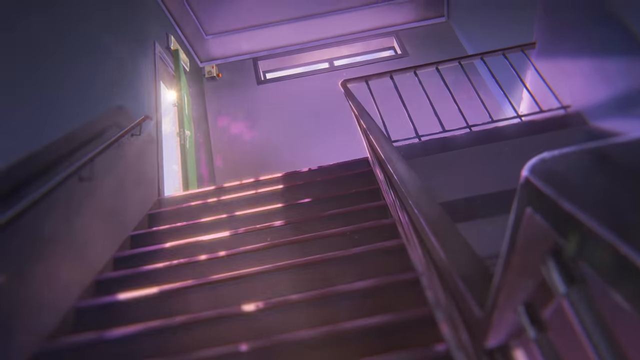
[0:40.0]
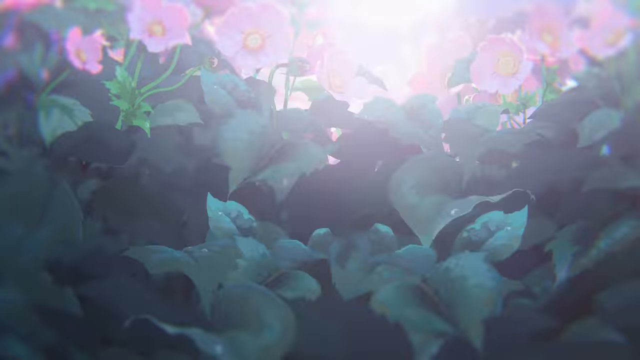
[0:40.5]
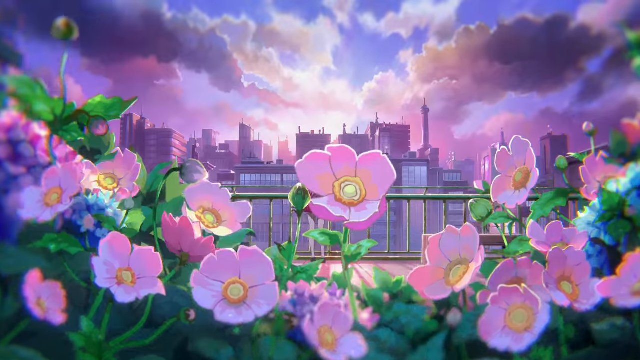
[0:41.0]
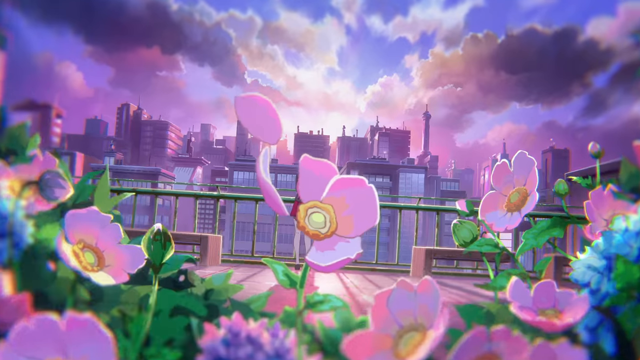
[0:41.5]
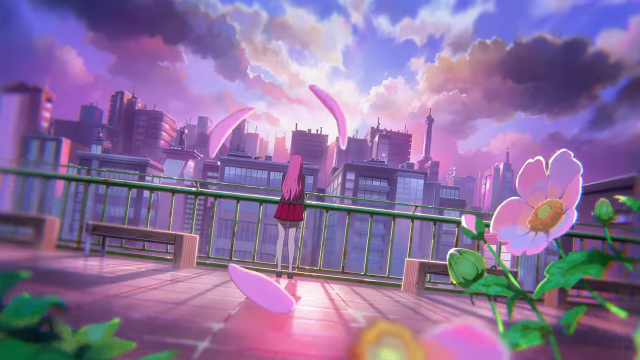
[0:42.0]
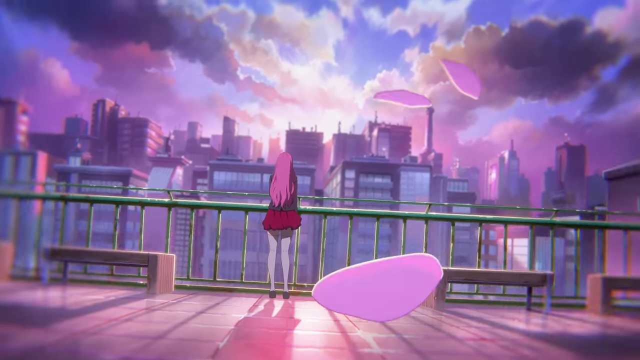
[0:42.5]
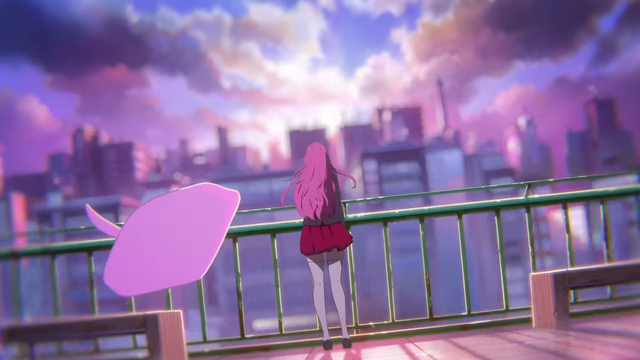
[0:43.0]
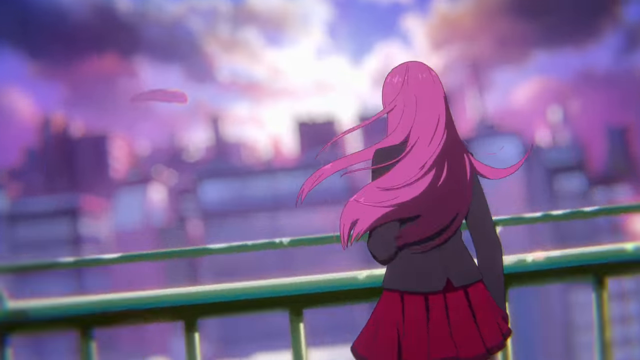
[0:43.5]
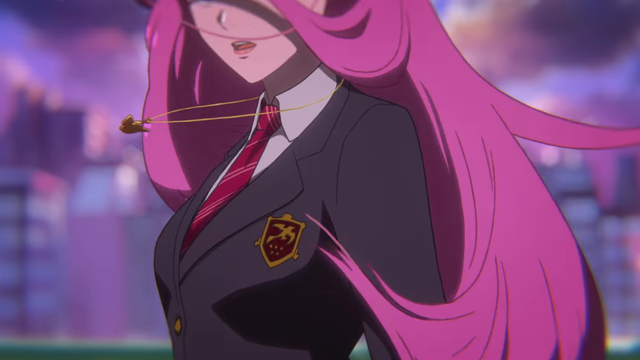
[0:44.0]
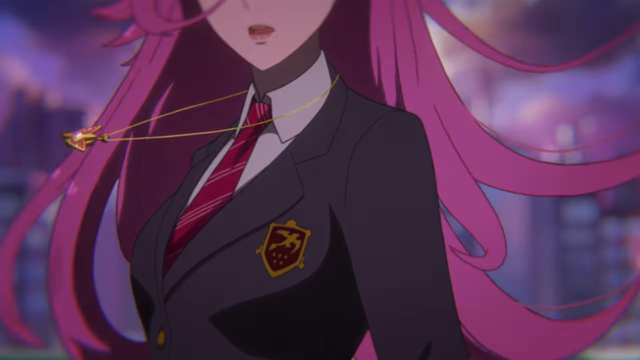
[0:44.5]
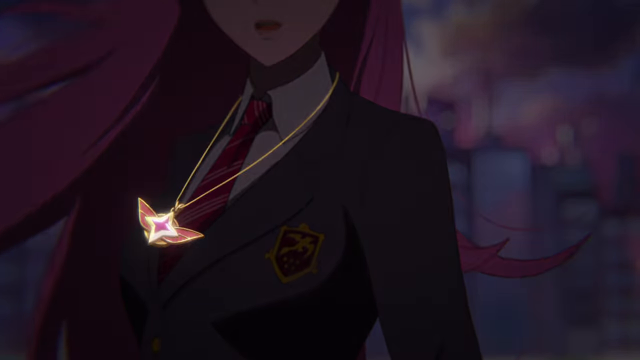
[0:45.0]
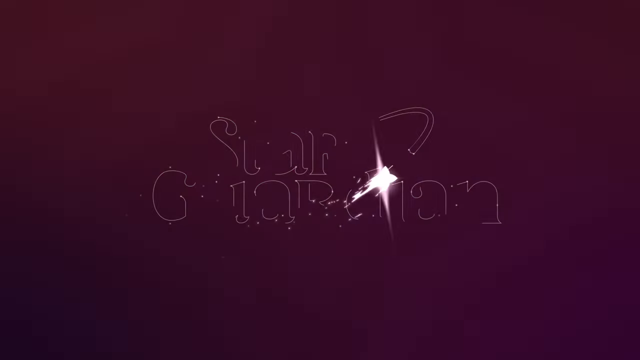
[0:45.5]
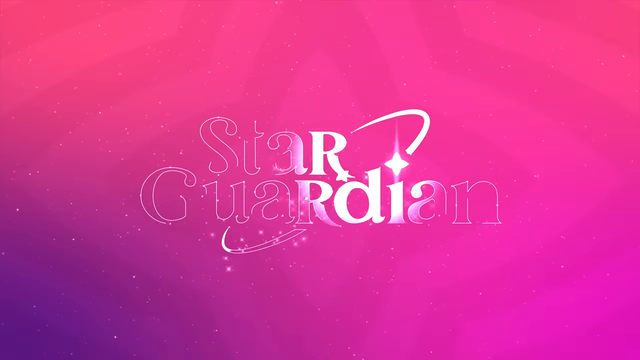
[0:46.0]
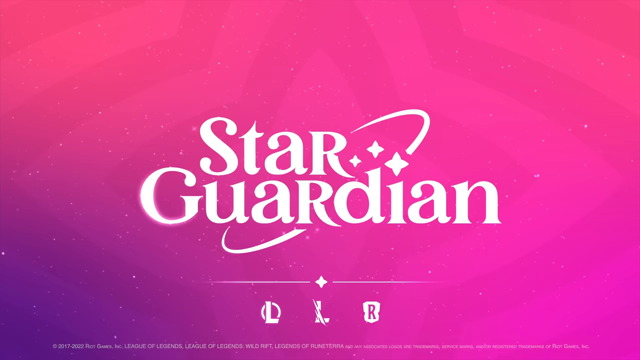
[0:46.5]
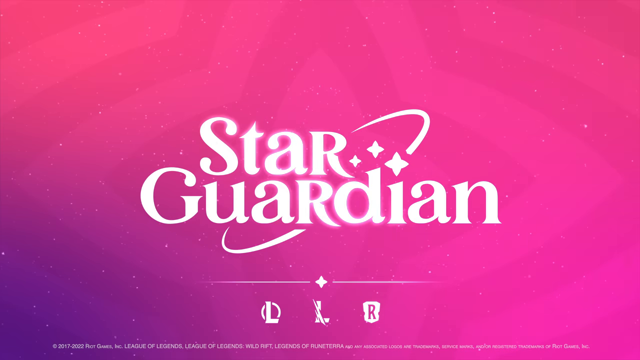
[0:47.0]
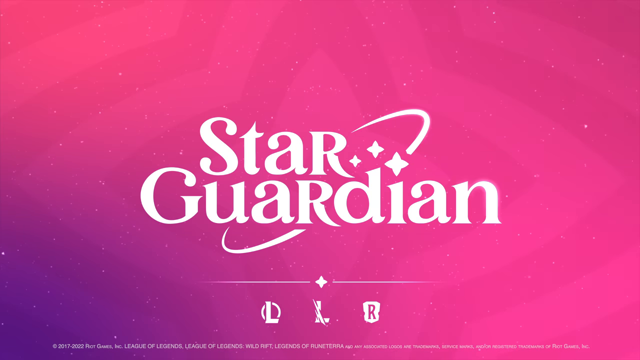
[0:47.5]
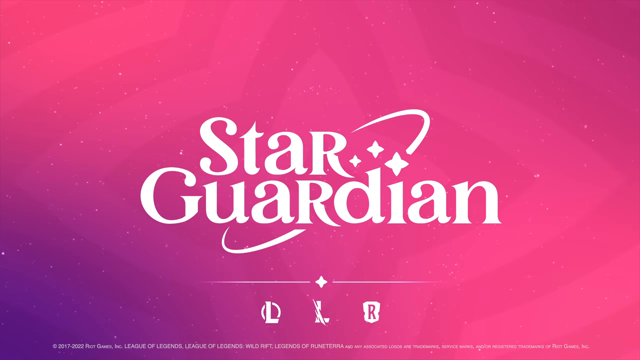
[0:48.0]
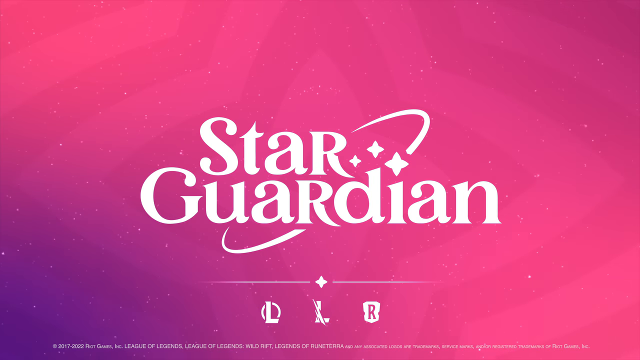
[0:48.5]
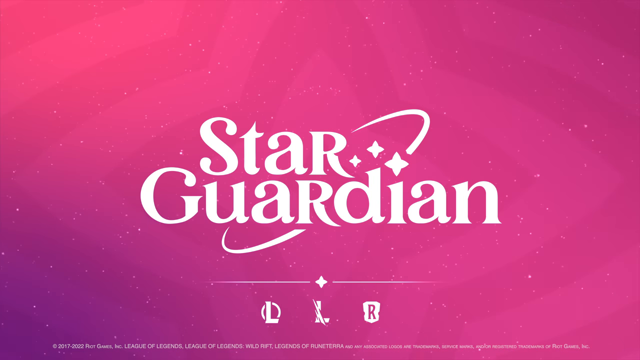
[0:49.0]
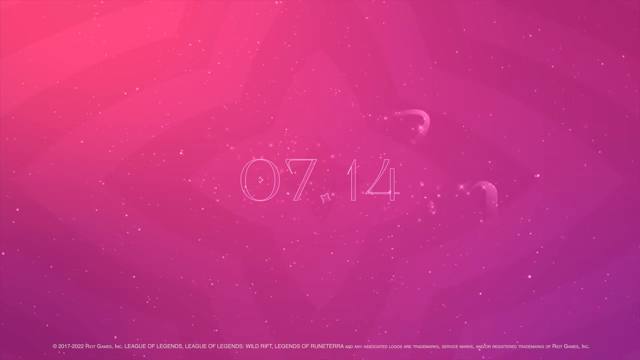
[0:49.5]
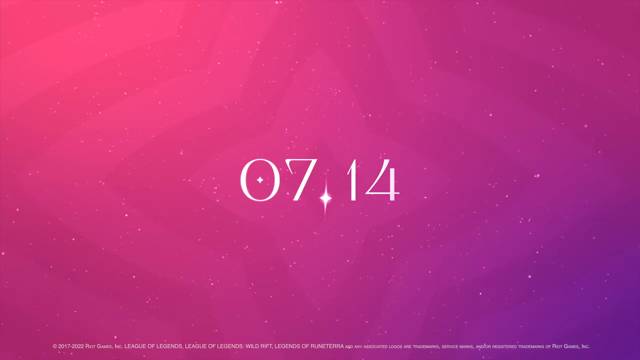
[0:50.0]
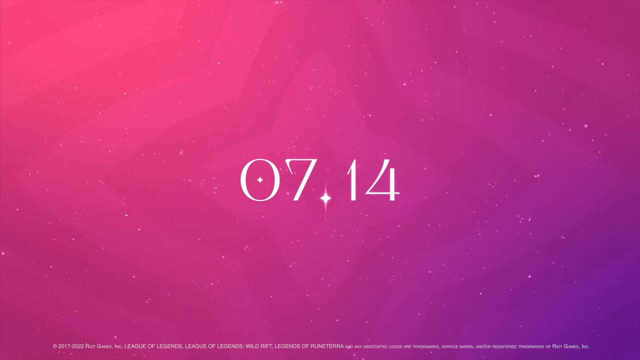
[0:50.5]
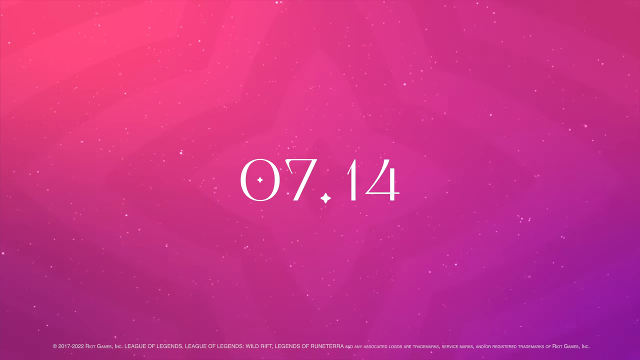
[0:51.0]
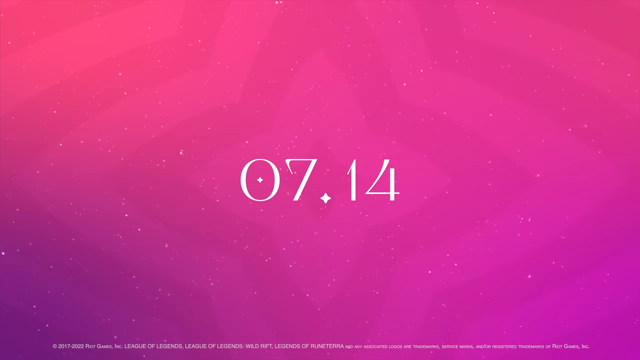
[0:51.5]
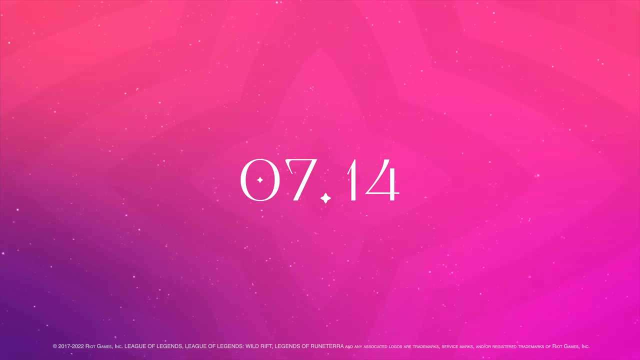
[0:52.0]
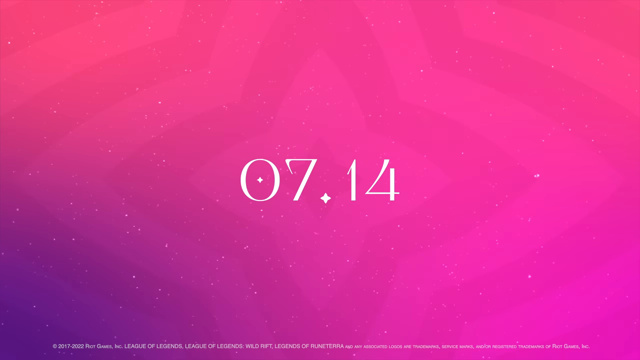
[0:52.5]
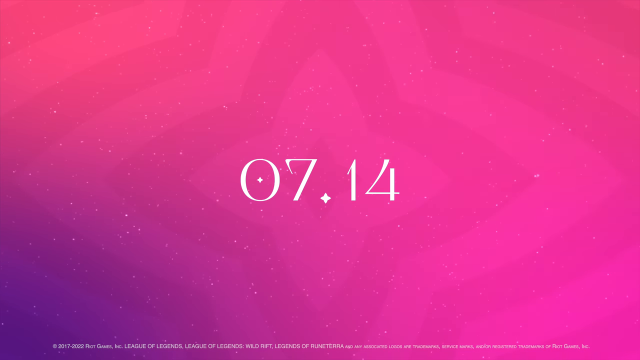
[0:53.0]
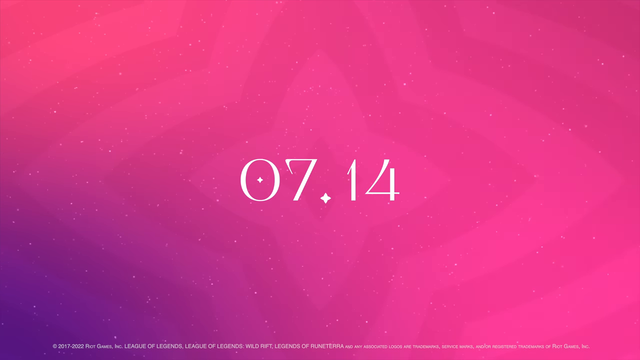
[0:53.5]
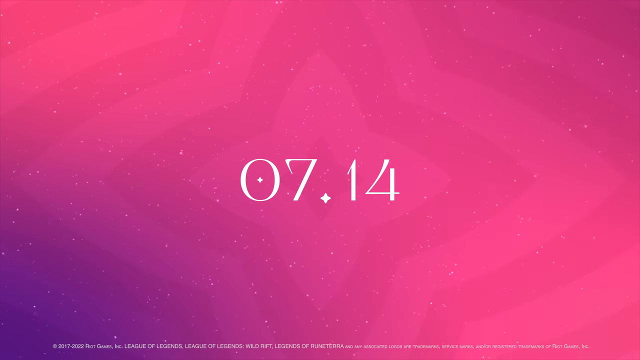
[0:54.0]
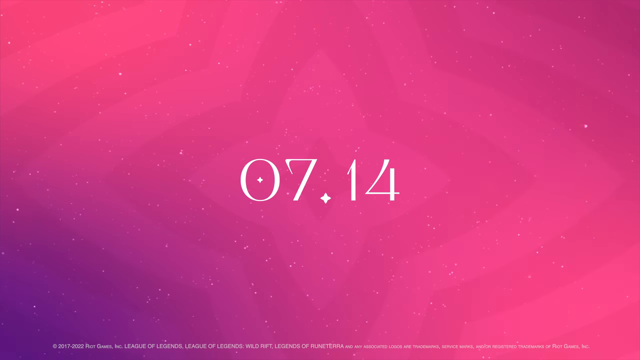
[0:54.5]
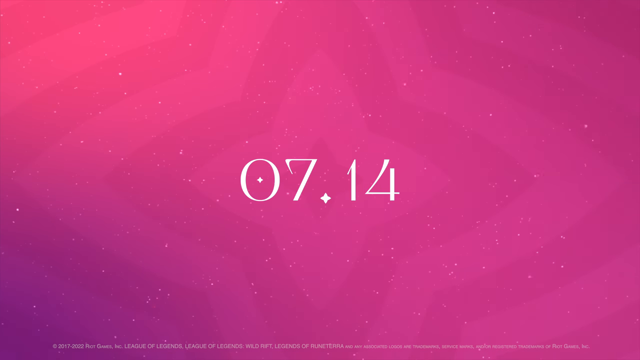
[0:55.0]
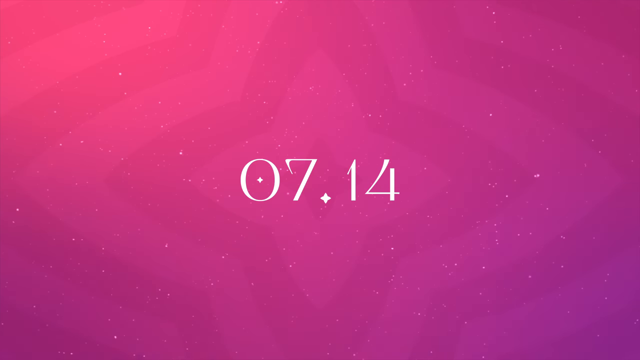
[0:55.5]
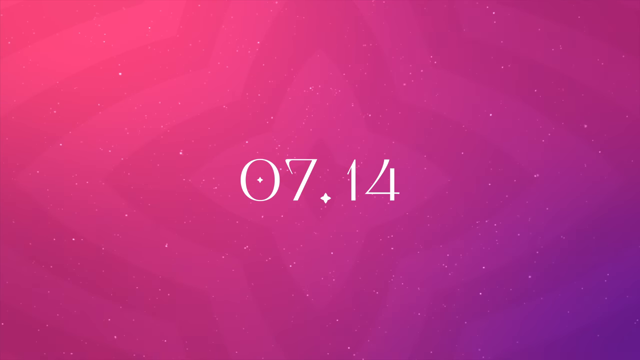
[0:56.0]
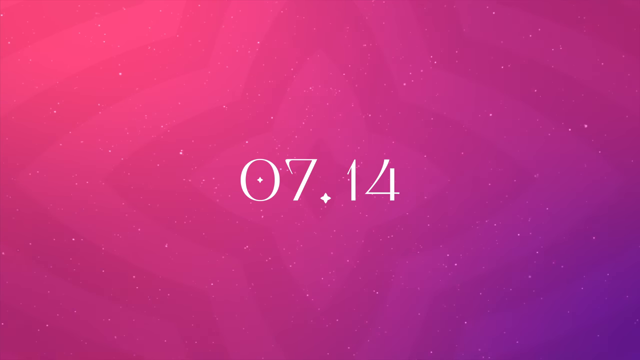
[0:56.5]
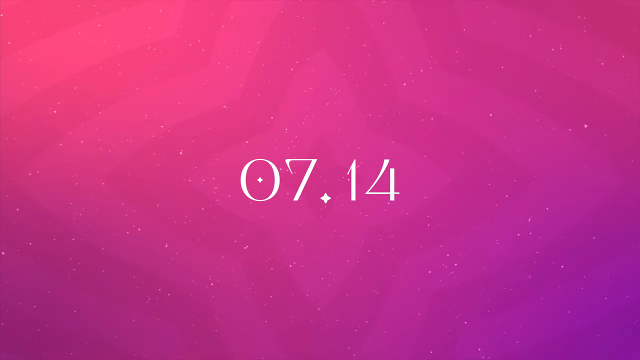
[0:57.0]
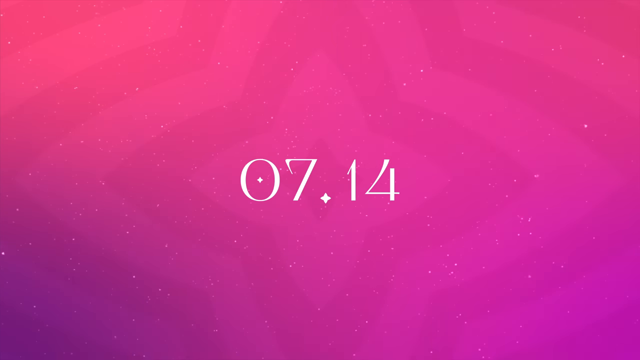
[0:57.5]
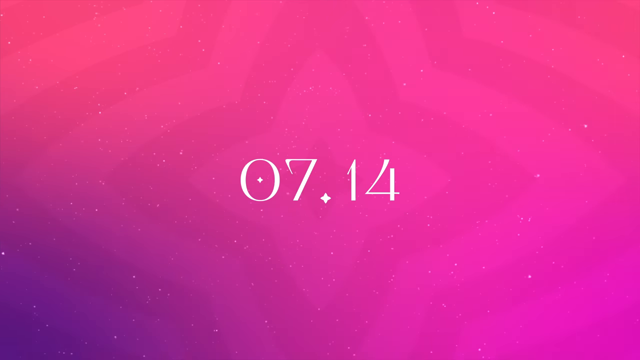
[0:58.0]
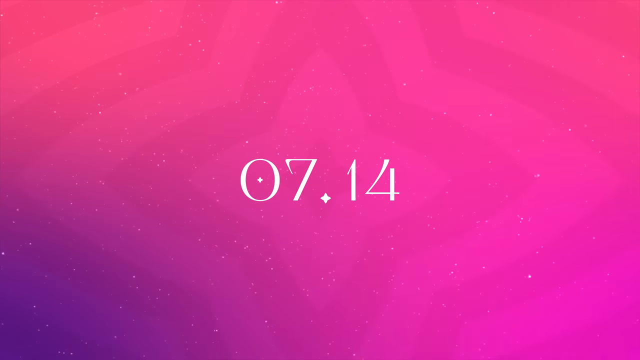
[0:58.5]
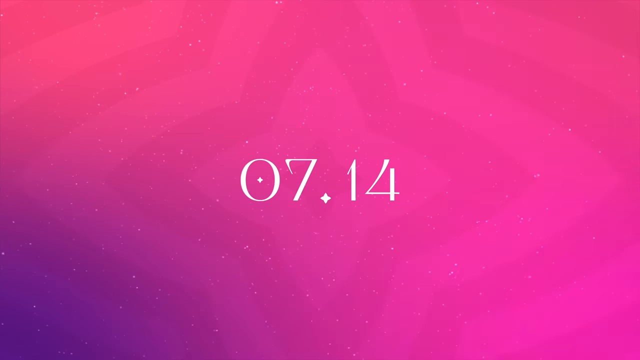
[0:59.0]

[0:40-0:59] A point-of-view shot looks up the steps in the game, followed by a flash of light before the next scene. This part has only a few scenes. The next scene moves through a bunch of flowers, with petals very close to the screen and some of them kind of flying away; the camera seems to shoot through the flowers to a girl standing on top of a building. She has long pink hair and wears a red tie and a school jacket. A pink screen then shows the game's name, "Star Guardian," with stars in the logo and a line through the name, along with the number "714," apparently indicating a July 14th release.